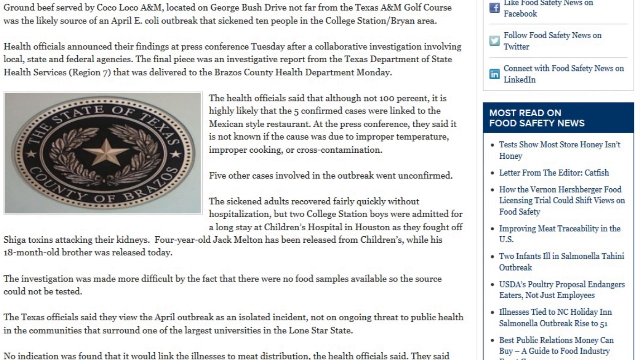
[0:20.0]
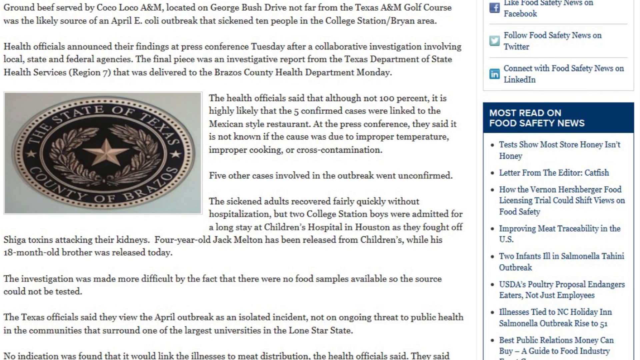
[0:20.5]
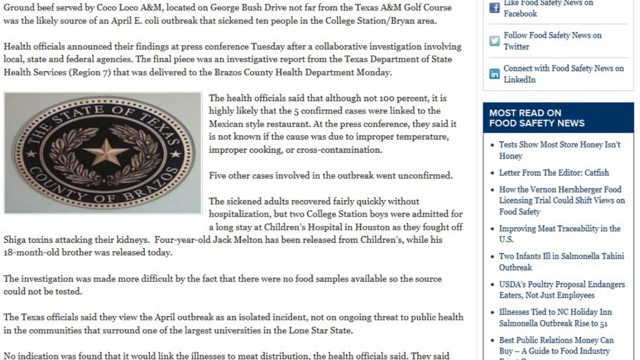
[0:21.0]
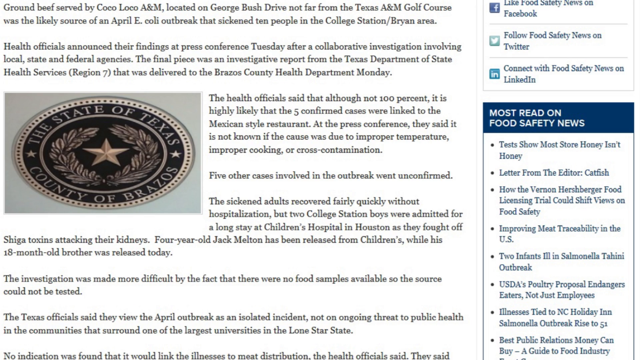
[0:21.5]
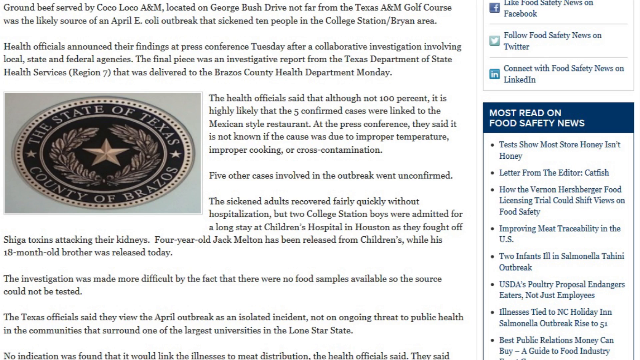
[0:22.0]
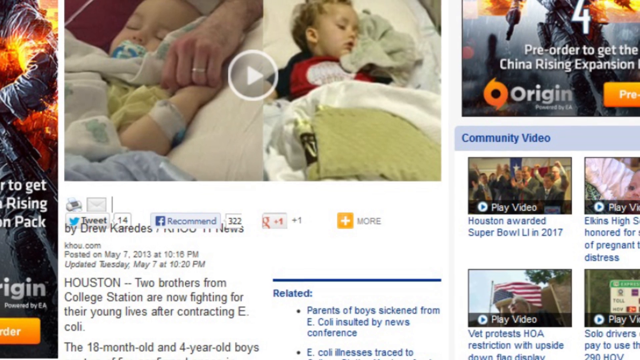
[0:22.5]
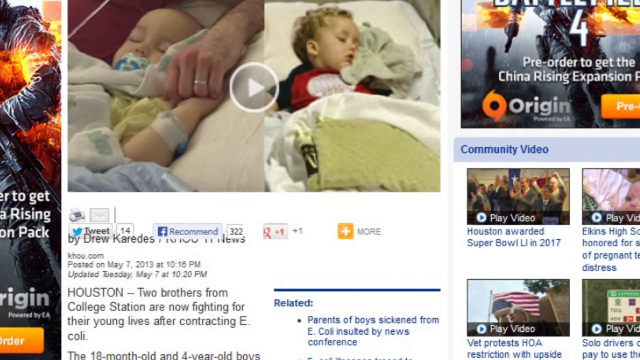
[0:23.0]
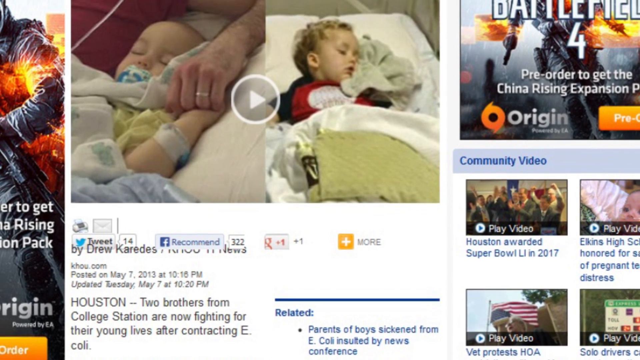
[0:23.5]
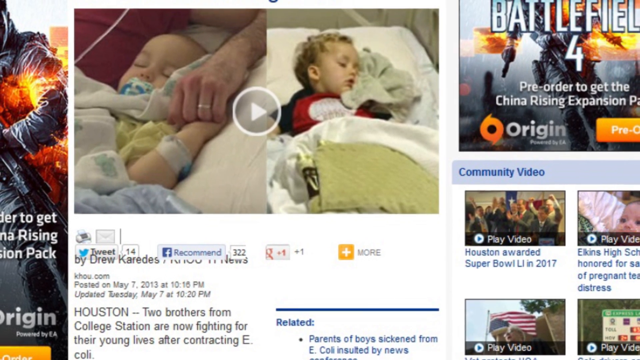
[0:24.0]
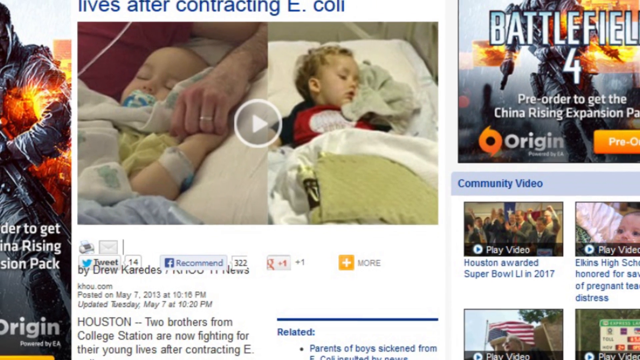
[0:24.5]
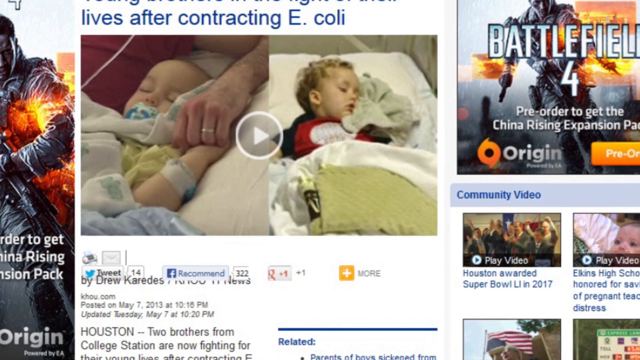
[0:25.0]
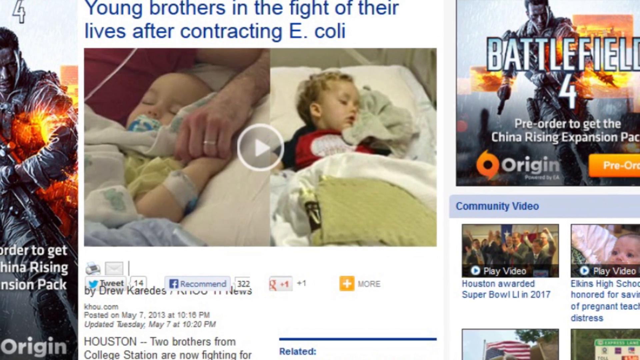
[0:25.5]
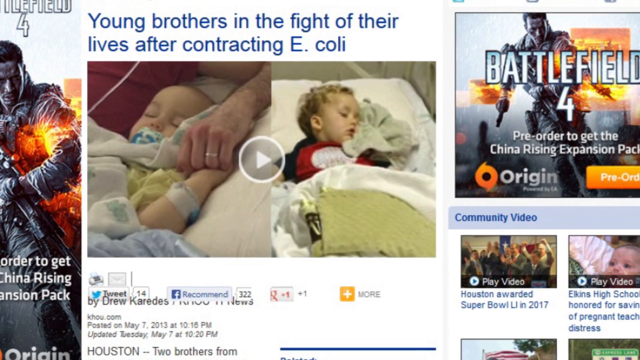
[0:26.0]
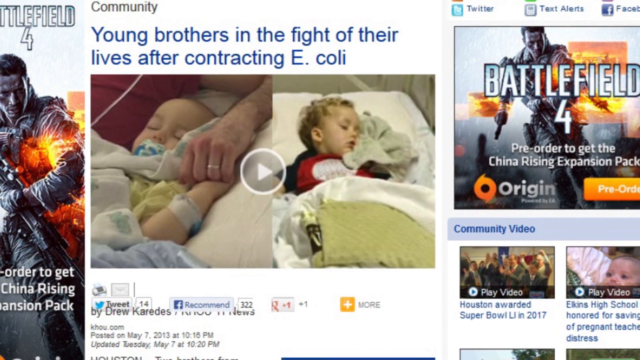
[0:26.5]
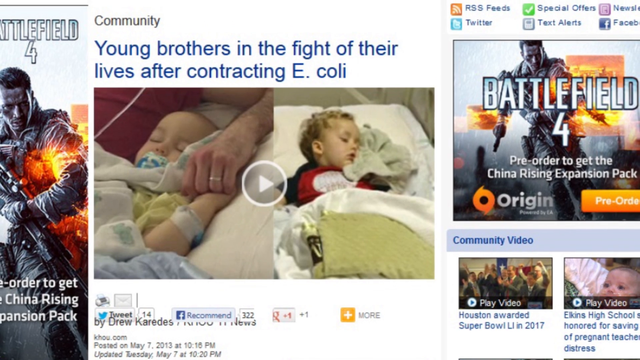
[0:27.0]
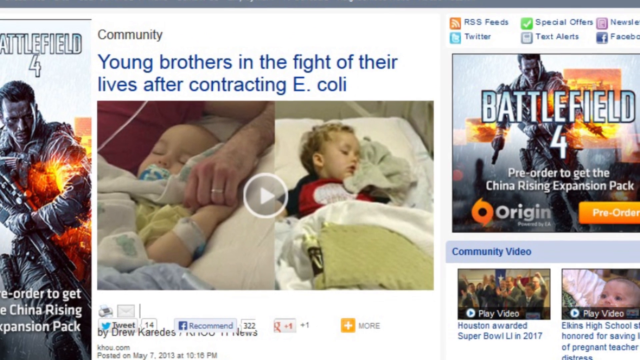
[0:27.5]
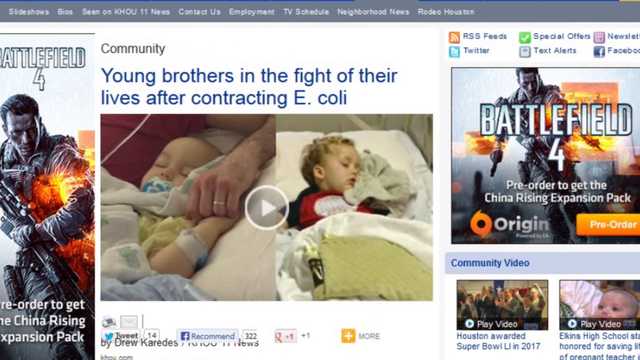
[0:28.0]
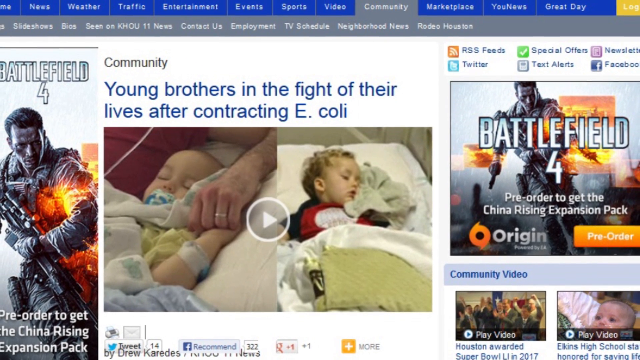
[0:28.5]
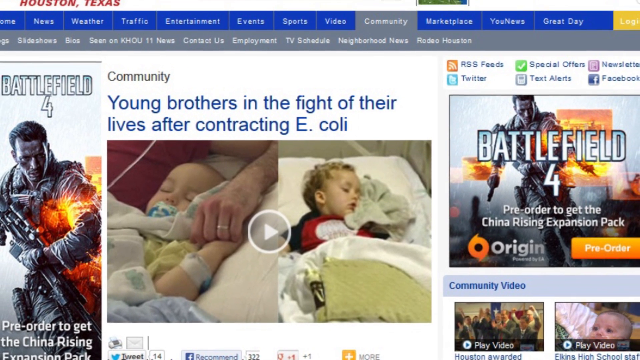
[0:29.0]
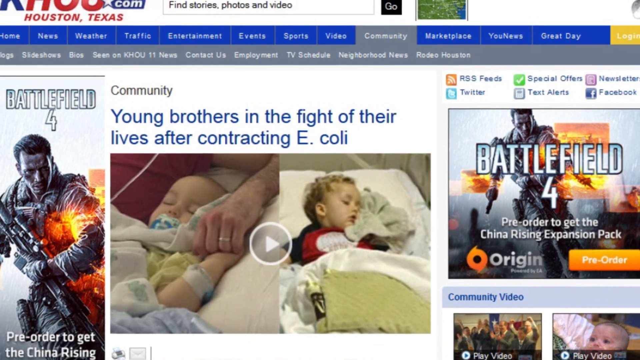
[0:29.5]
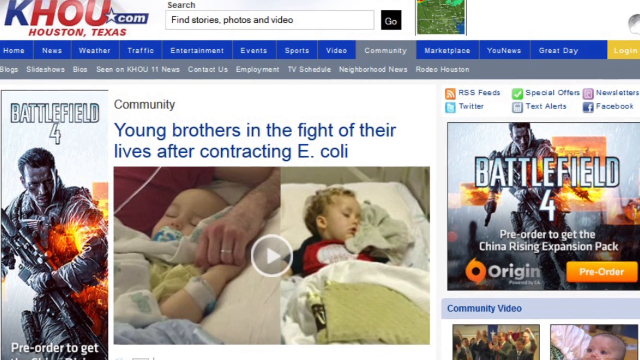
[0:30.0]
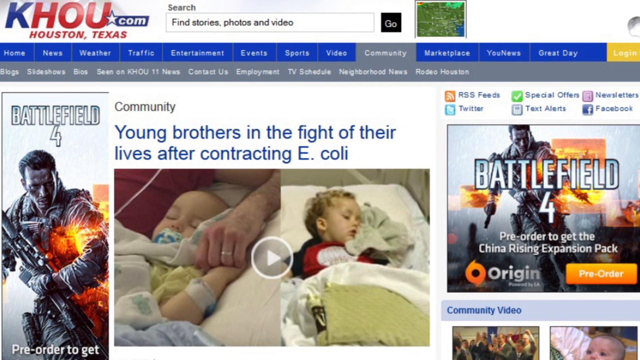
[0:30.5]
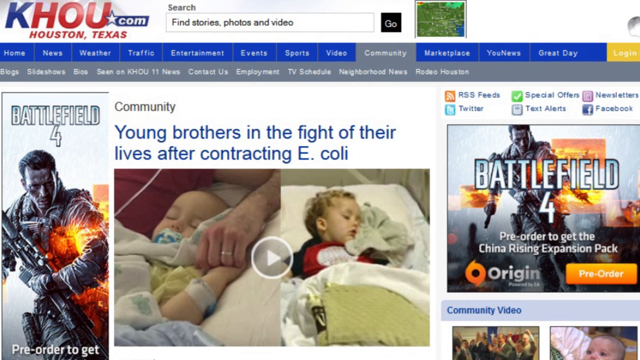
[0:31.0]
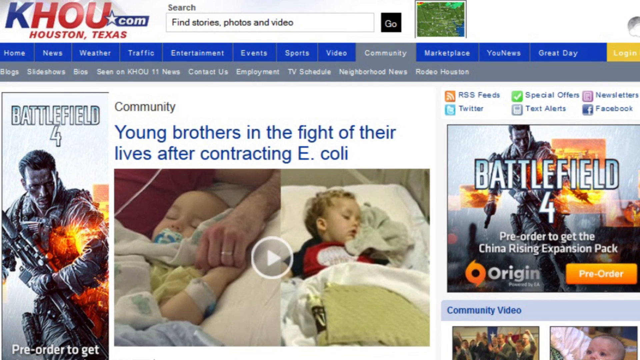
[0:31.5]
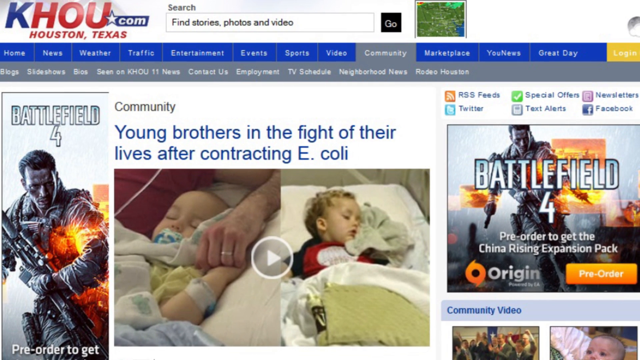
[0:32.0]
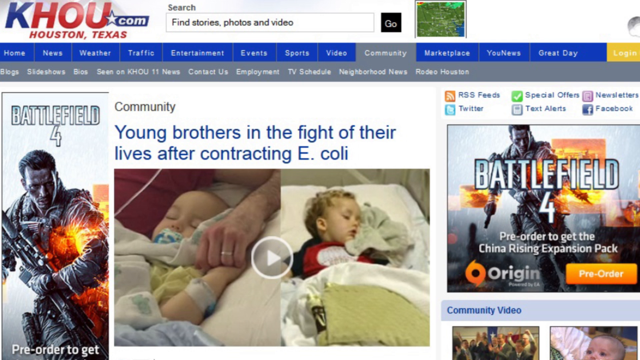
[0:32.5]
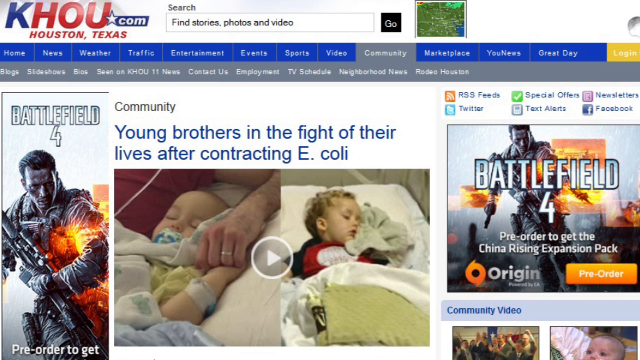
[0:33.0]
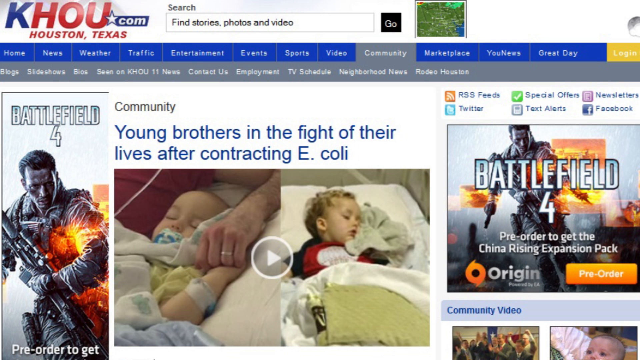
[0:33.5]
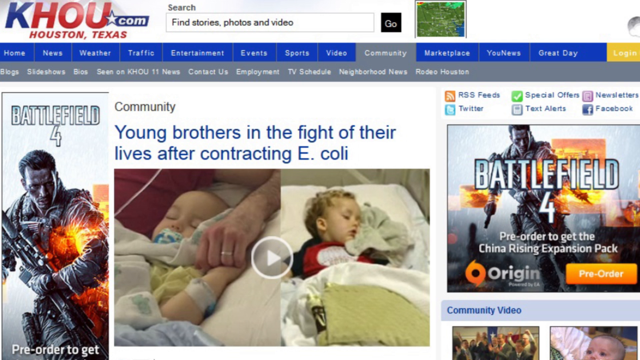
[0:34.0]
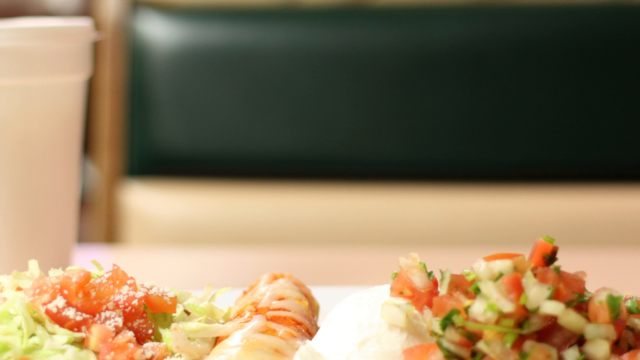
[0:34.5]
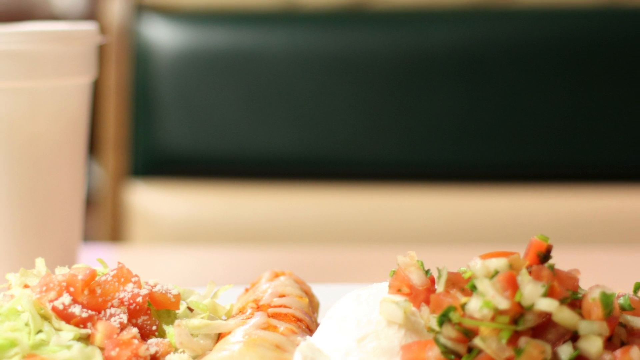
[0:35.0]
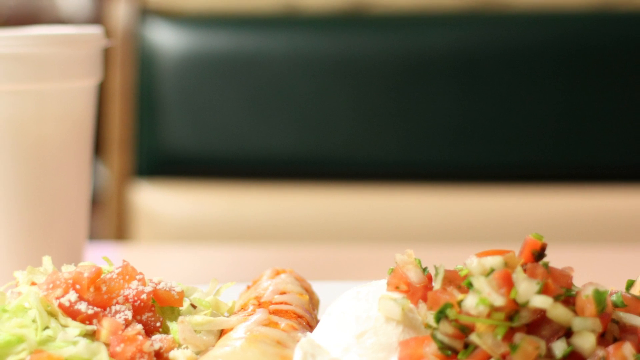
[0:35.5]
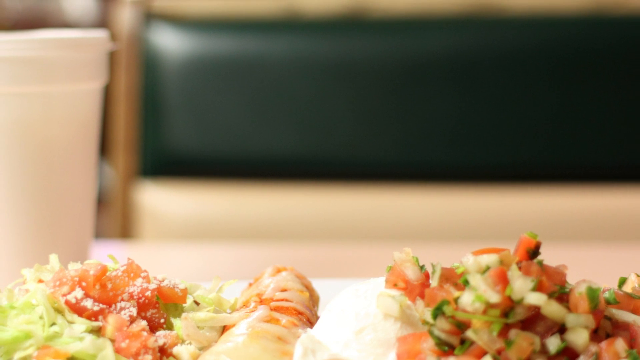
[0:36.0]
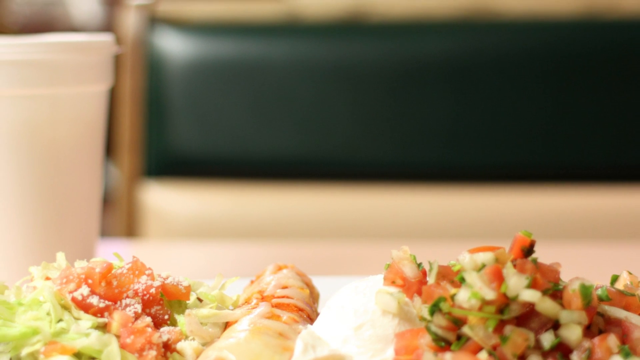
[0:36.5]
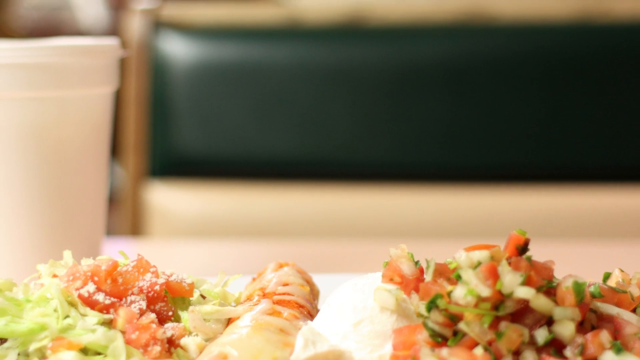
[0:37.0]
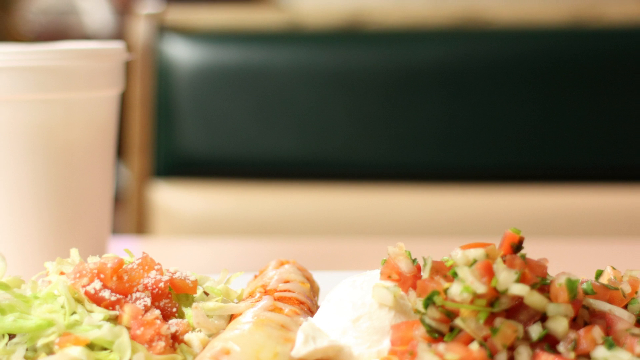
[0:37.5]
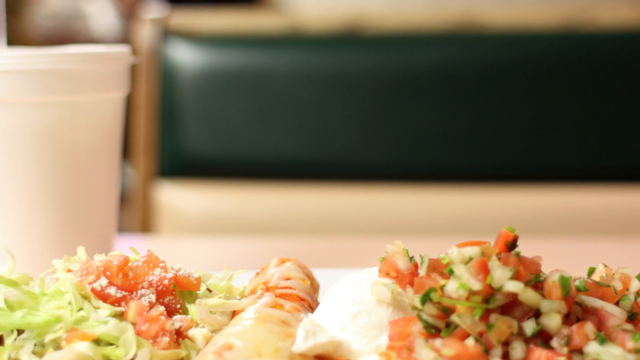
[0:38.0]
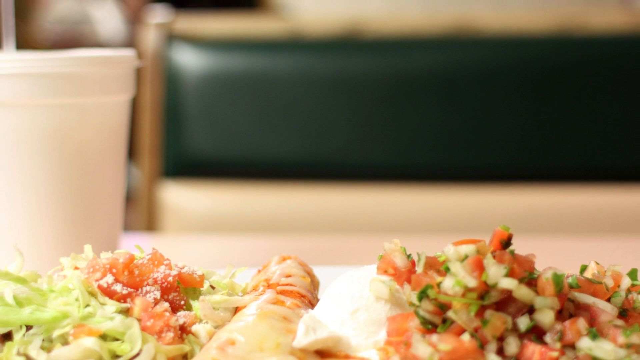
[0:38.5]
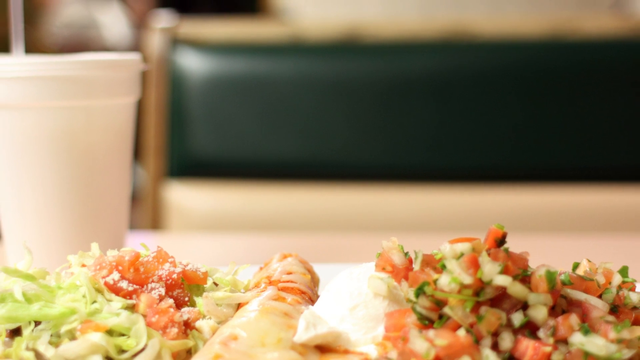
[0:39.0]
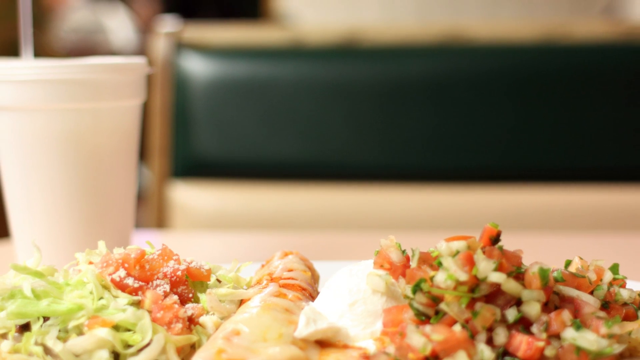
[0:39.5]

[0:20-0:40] An internet article full of text is shown, with a left-aligned image of a Texas badge bearing the words "the state of Texas, country of Brazos". Then it switches to another article. At first only an image is visible: two photos of two different kids lying in hospital beds, one of whom has a baby pacifier in his mouth. After a while the website slides up to show a blue article title that says "young brothers in the fight of their lives after contracting E.coli". On the right side of the website there is an advertisement for a Battlefield 4 pre-order. The website then slides up even more to show its header, khou.com, with the words "Houston, Texas" below it. Next, an image of some salad being served on a white plate in a restaurant appears and slowly zooms out.